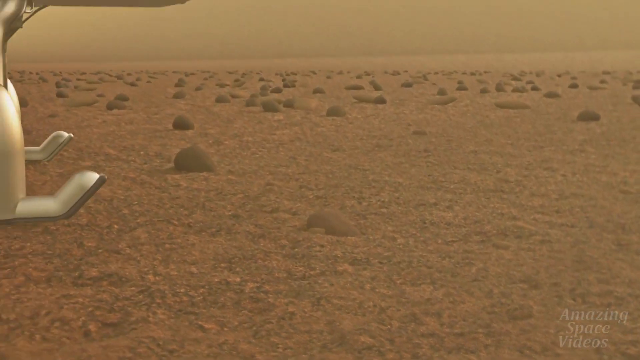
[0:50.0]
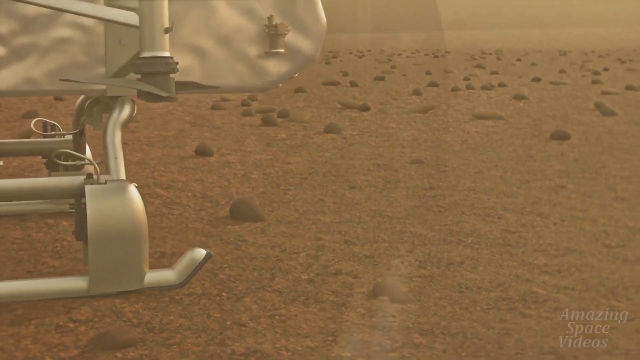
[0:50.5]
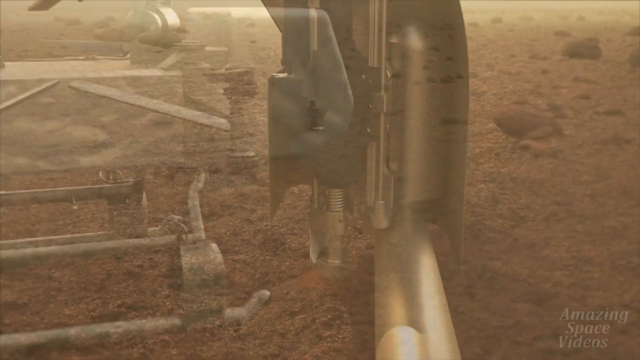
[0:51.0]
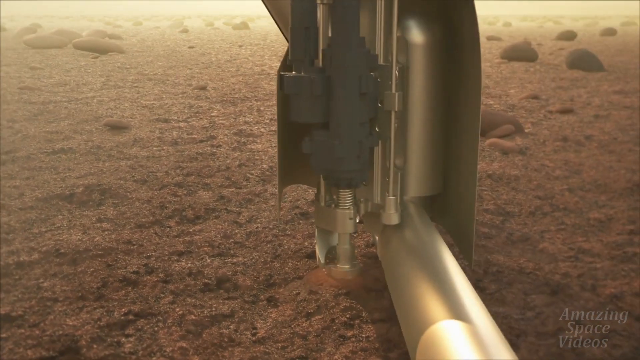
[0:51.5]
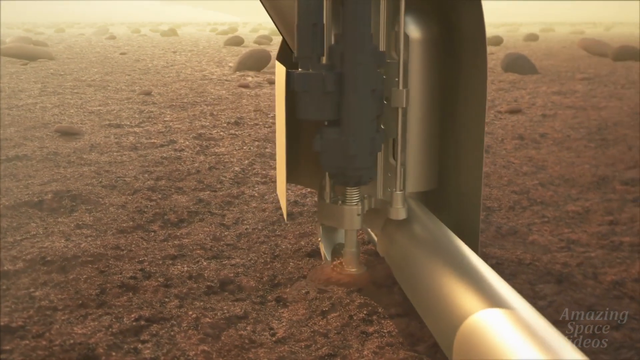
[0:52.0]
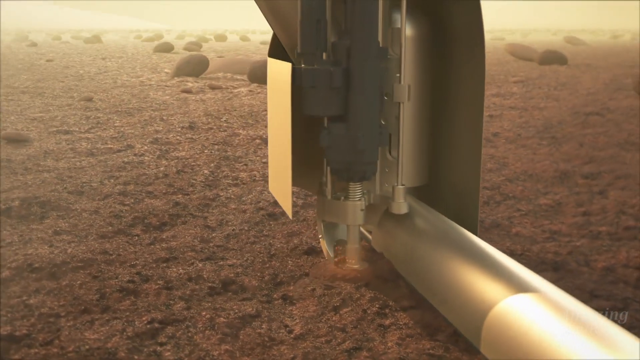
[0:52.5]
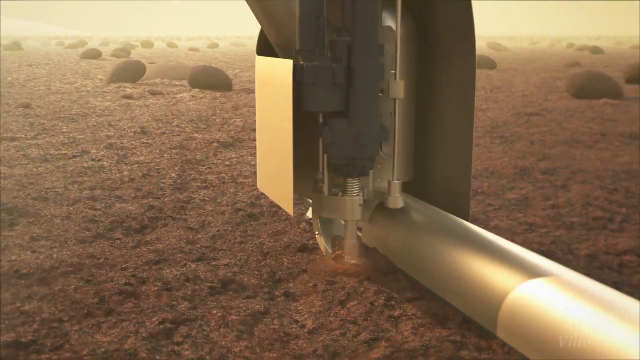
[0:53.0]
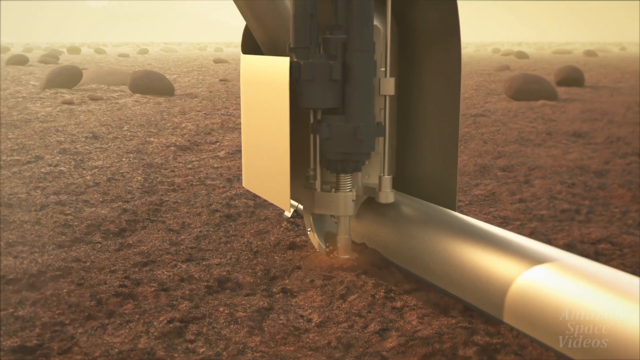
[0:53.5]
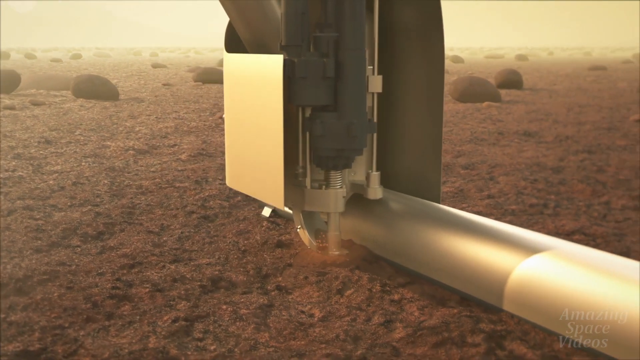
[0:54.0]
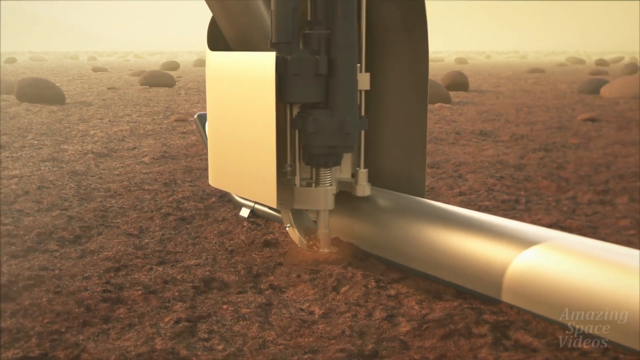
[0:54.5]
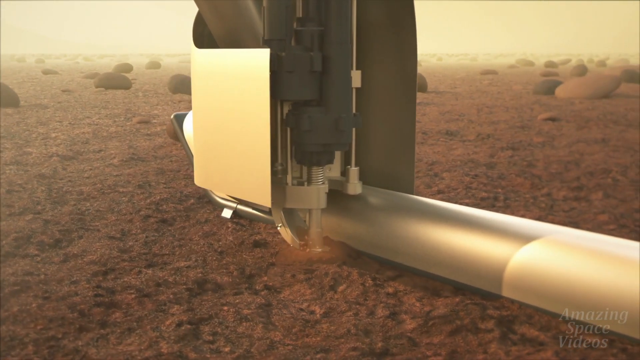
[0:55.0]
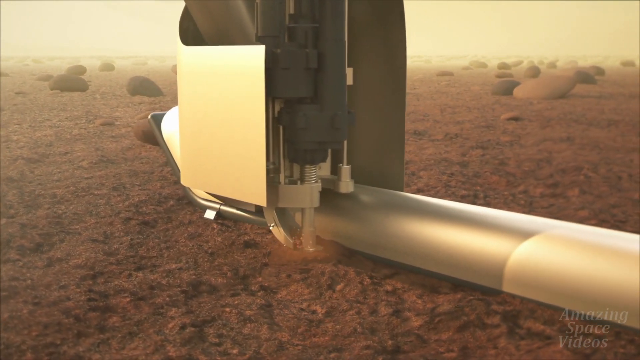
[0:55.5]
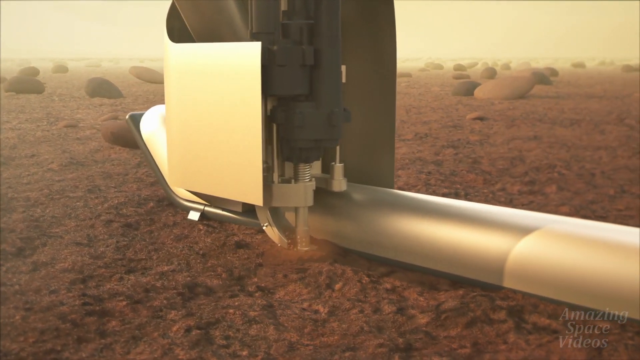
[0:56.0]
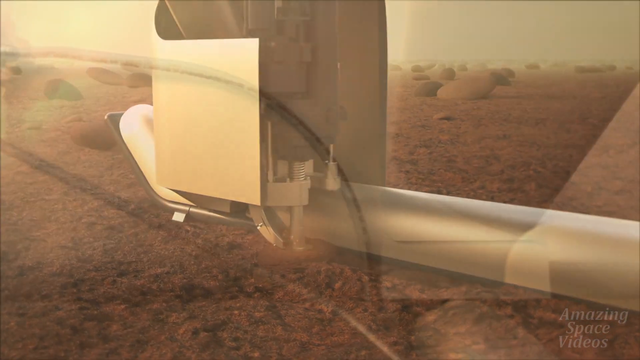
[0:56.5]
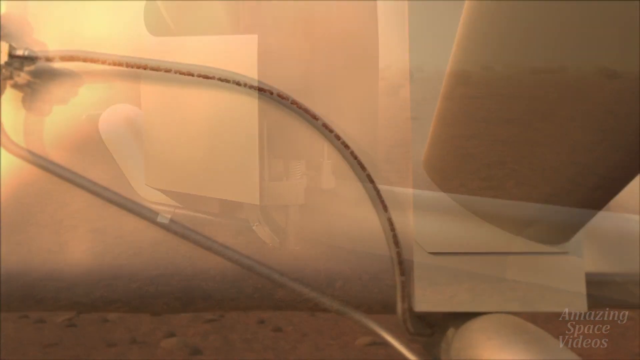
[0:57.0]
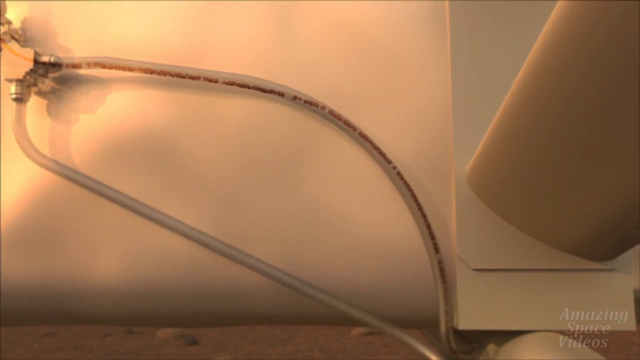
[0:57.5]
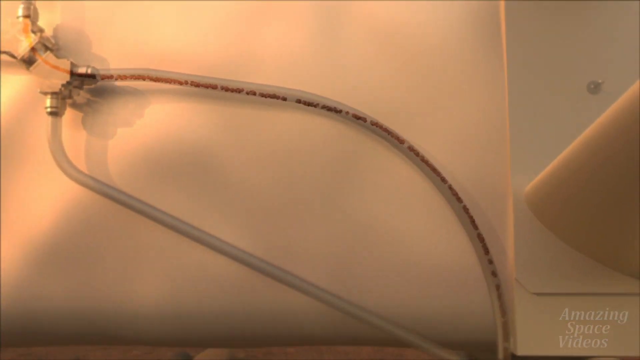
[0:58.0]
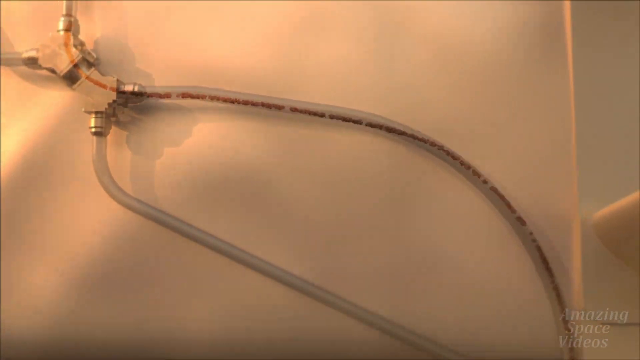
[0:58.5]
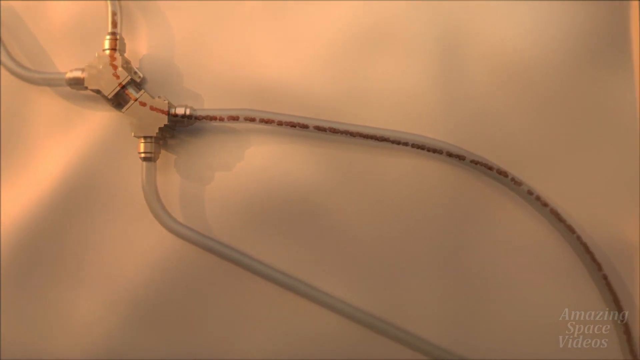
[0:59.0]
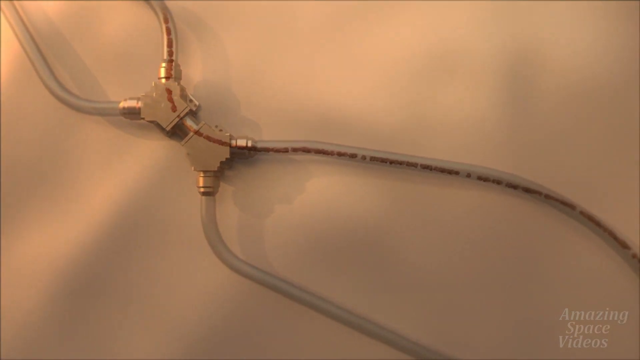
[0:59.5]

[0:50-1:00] The view zooms in on a flat brown 3D-rendered surface, then zooms out to reveal a large quadcopter drone. The video fades to the side of the drone, to one of the railings it is resting on. Attached to it is a large black tool with a drill coming out of it. The drill slowly drills down into the flat brown ground, and brown dust can be seen as it continues drilling downward. The camera changes angle to a large tube assembly, presumably inside the drone, with multiple small brown specks of dust going through it.